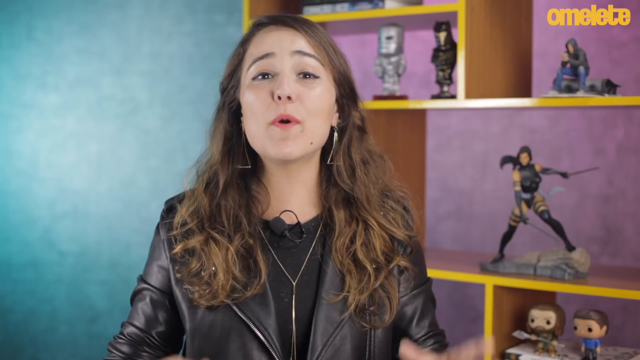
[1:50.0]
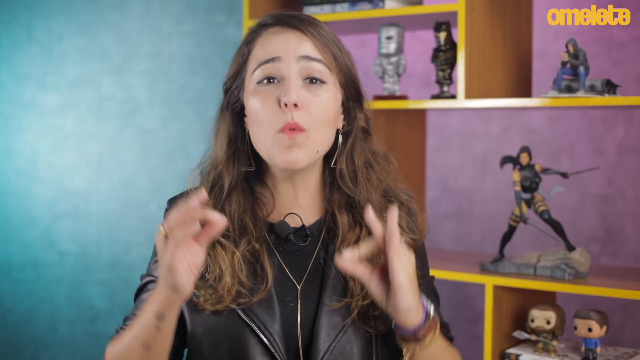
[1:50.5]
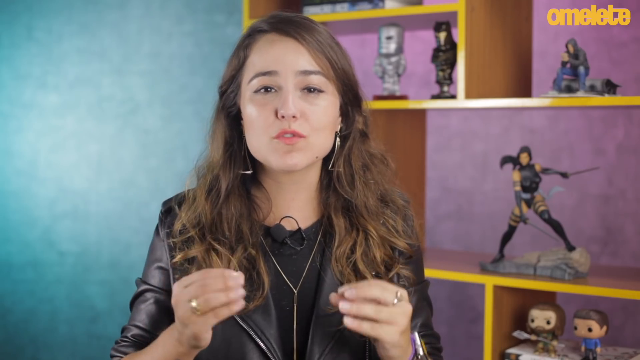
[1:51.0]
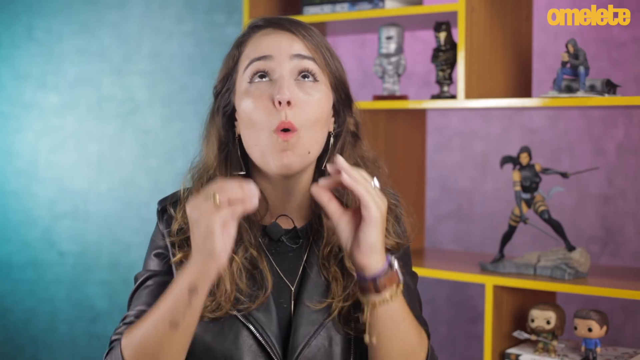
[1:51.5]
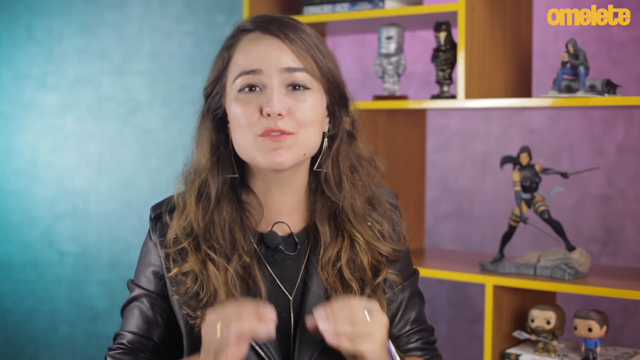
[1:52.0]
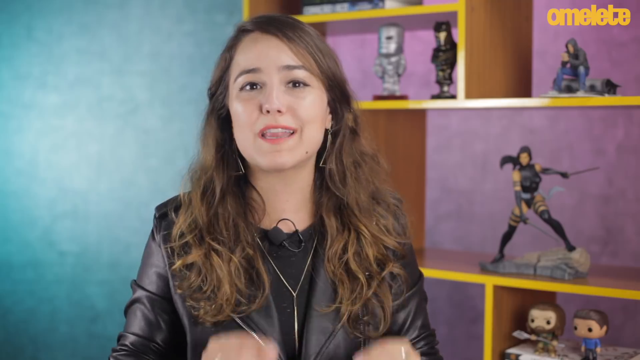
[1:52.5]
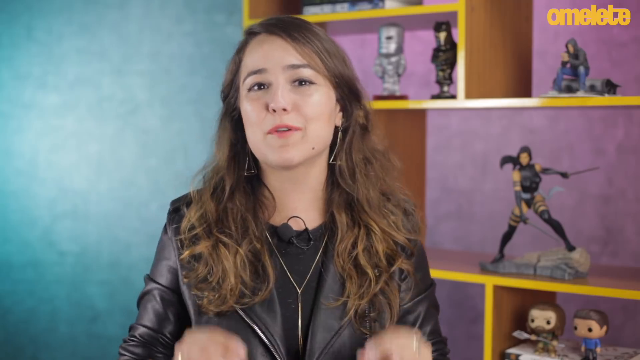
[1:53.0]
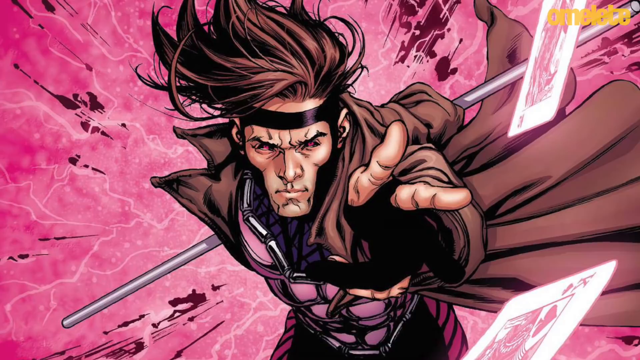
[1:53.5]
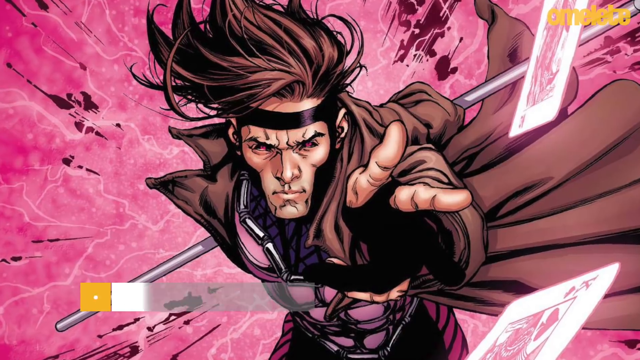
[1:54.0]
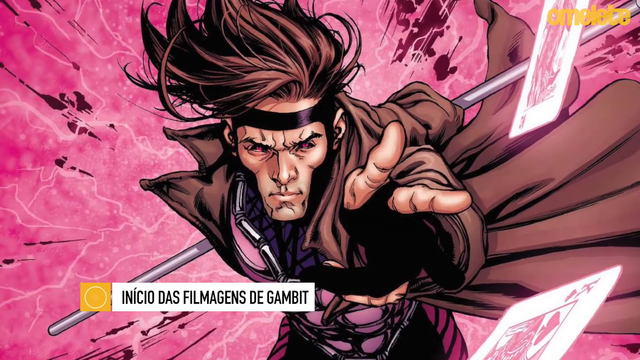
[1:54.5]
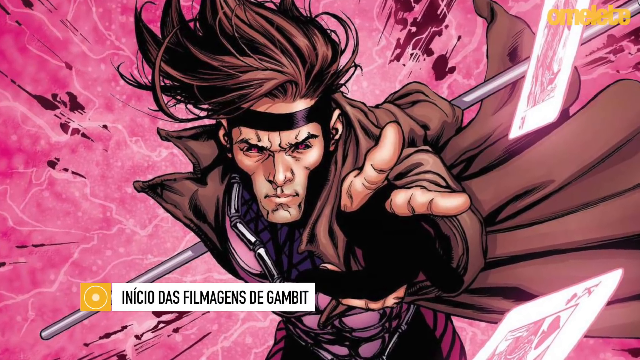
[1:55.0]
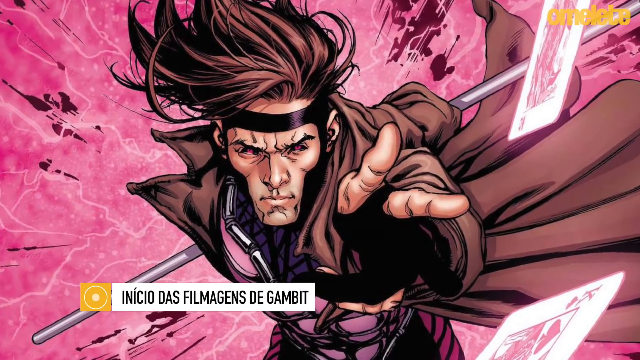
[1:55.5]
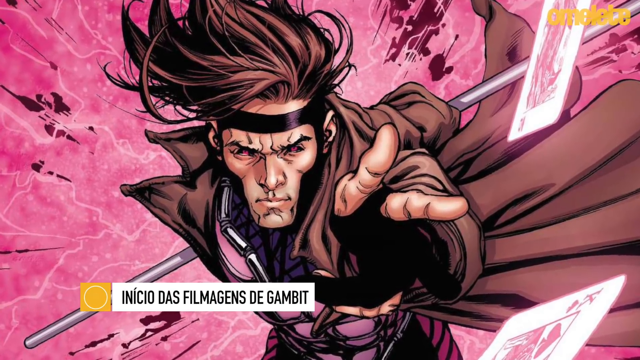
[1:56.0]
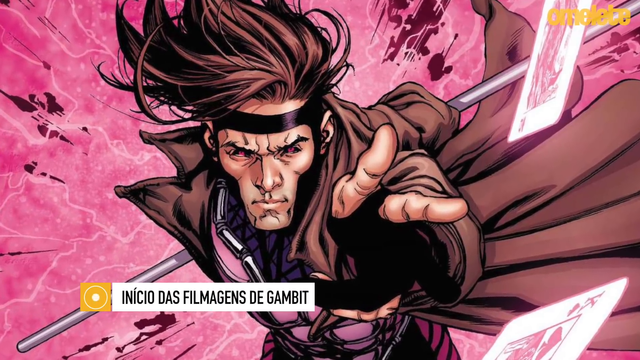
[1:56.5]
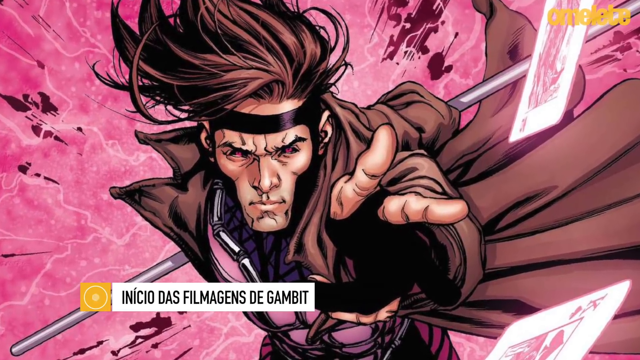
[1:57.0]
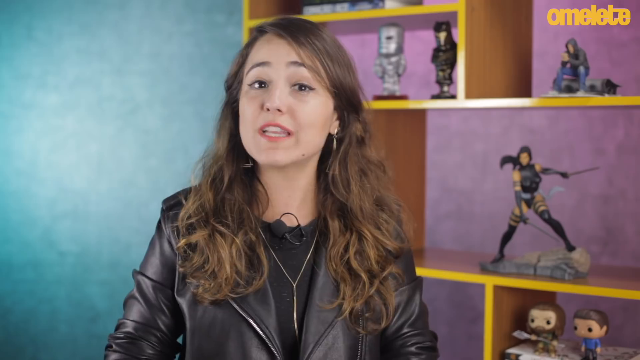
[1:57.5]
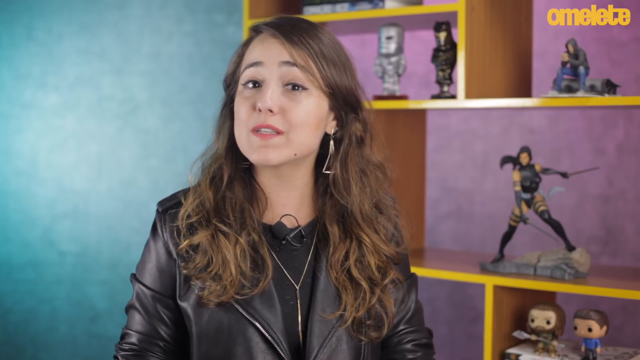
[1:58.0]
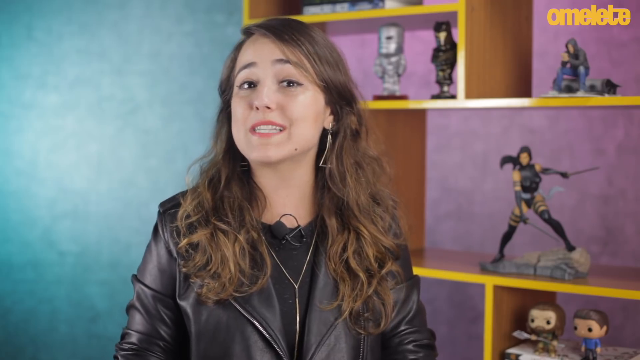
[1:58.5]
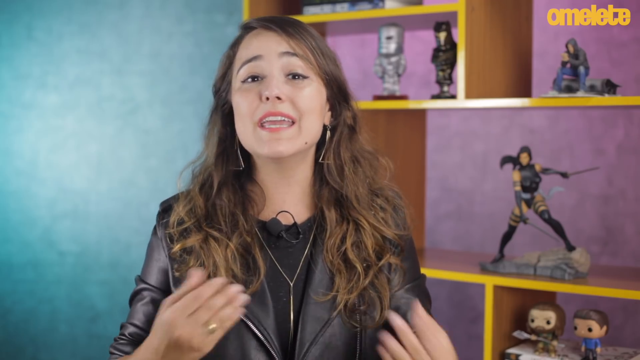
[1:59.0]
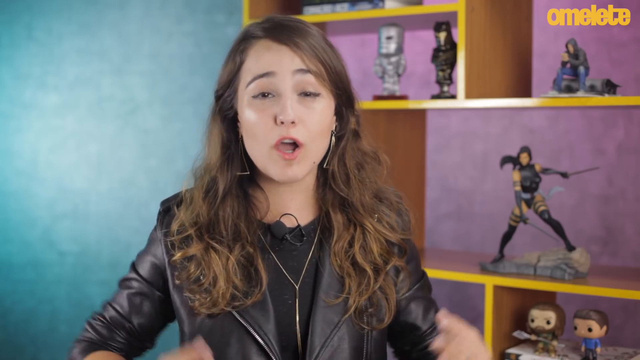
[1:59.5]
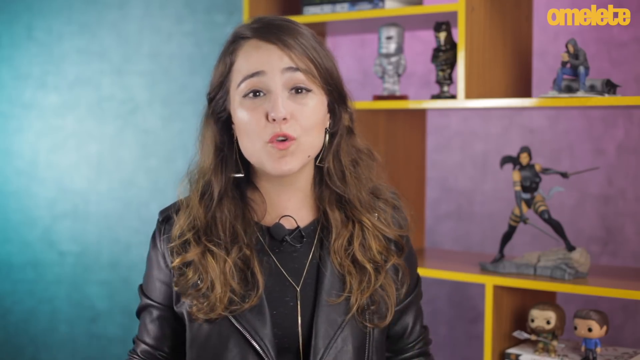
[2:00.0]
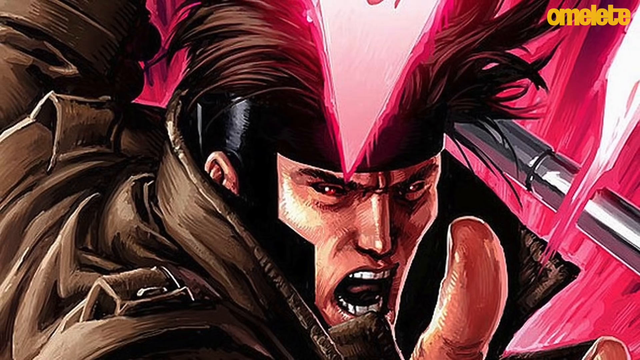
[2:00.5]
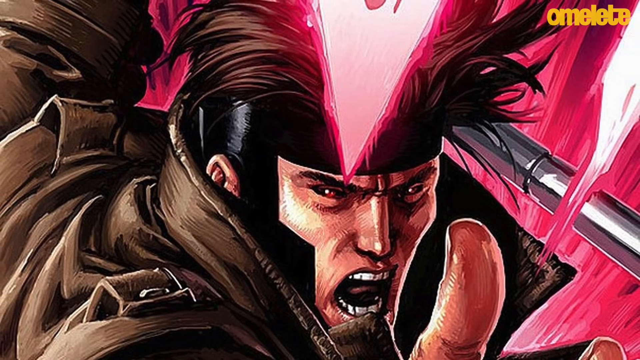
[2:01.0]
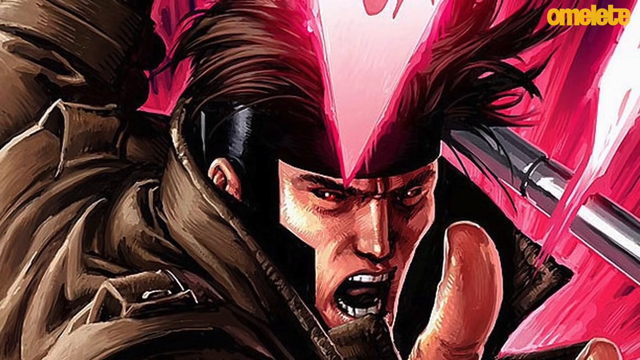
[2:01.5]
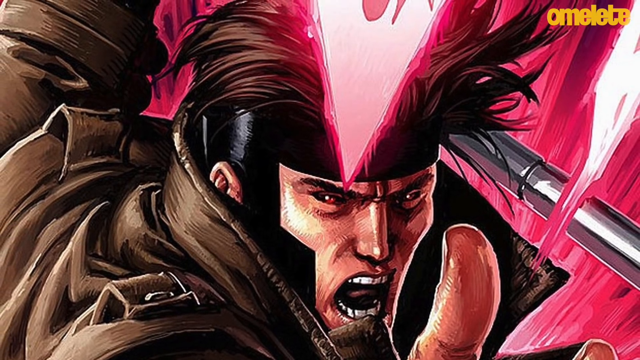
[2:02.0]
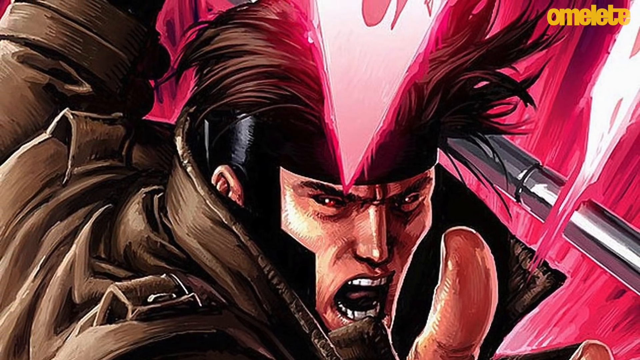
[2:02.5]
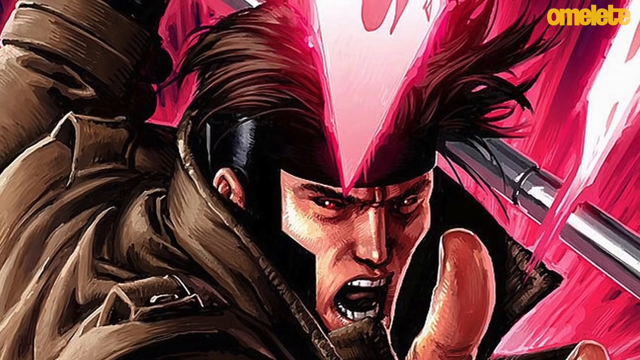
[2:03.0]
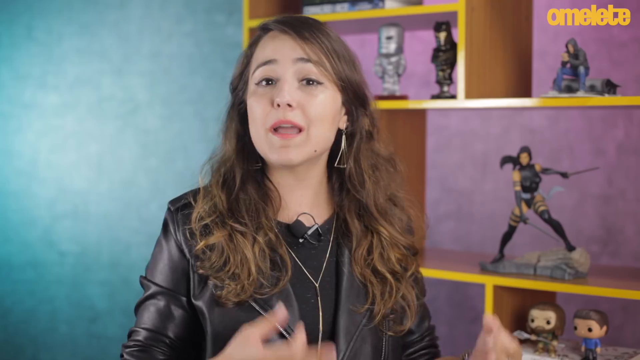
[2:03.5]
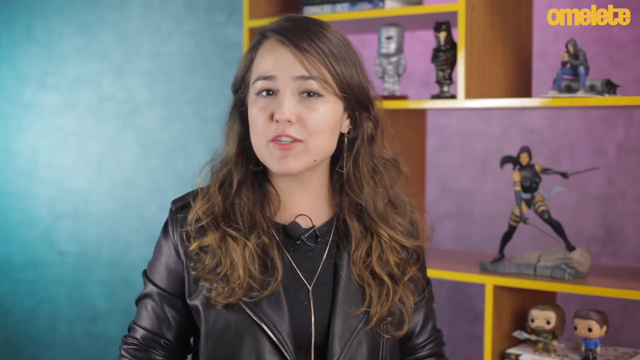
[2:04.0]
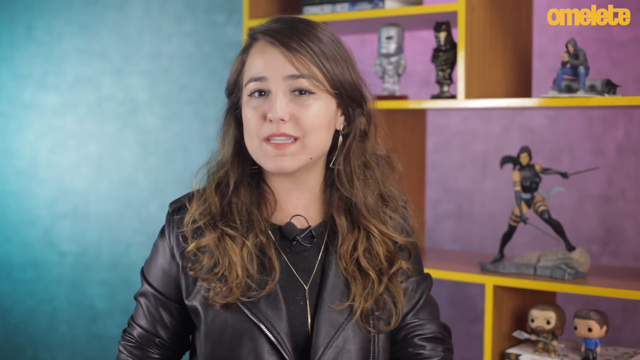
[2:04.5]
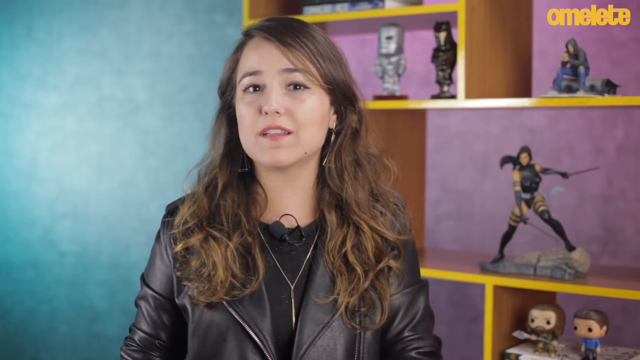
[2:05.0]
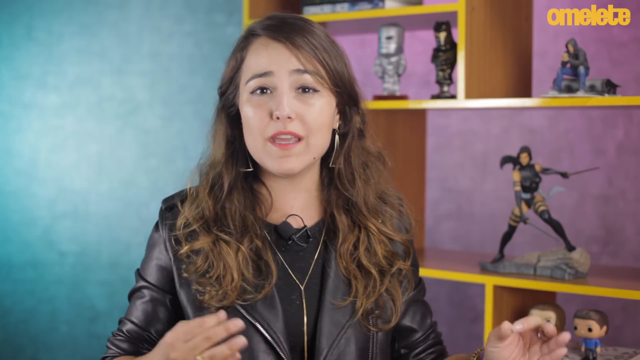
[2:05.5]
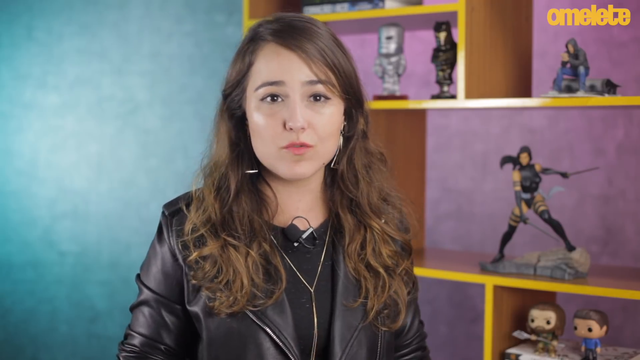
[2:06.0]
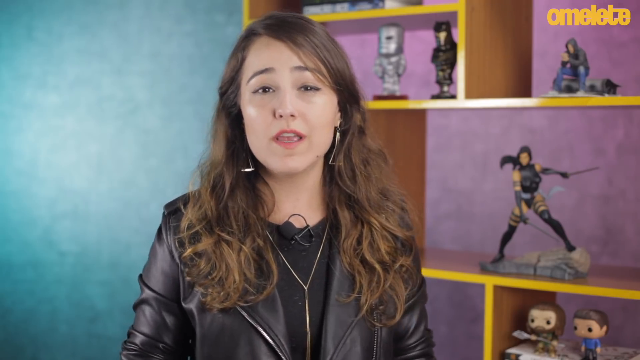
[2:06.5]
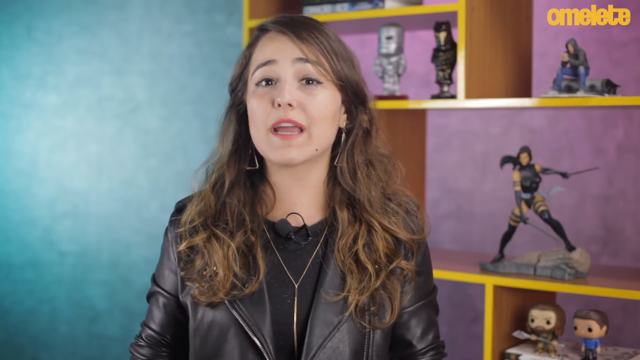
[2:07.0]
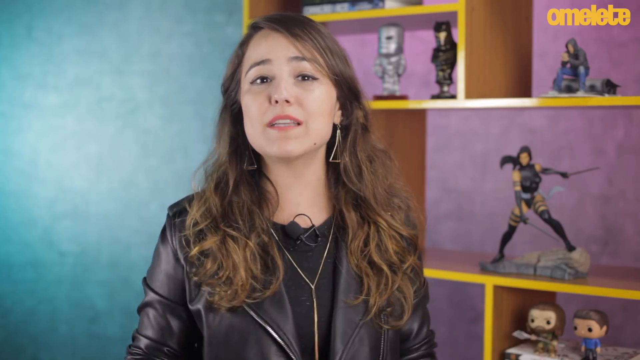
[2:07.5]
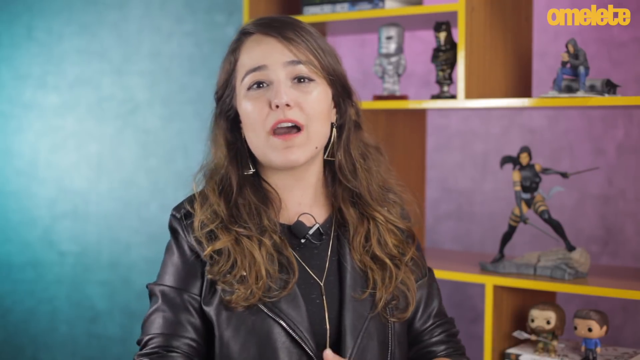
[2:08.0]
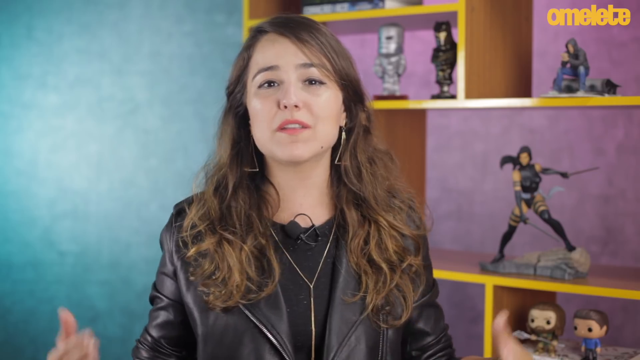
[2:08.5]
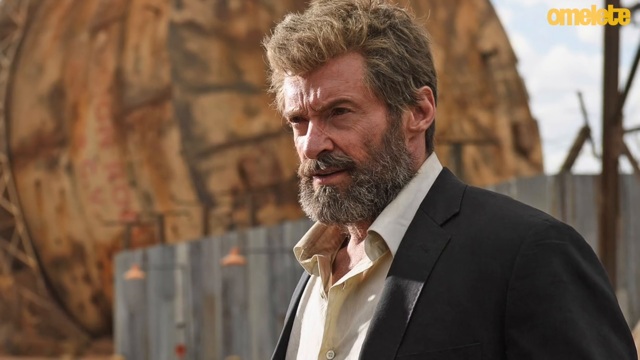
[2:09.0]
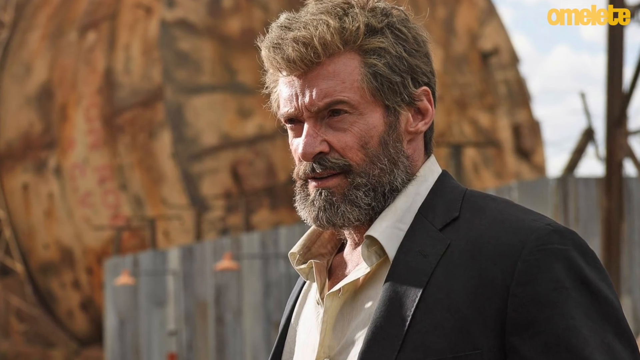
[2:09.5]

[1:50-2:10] The woman talks to the camera briefly, then the video switches to an animated Marvel X-Men character with a caption below him that includes "gambit". After he appears briefly, it cuts back to the woman, then to the same X-Men character, who seems to be in combat mode holding a silver rod. It switches back to the woman, then to a picture of Logan from the film Logan with a seasoned look, appearing in a suit. It cuts back to the woman still talking, and ends with Logan on the screen.